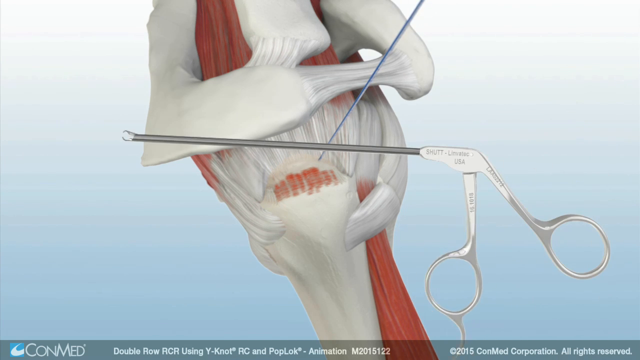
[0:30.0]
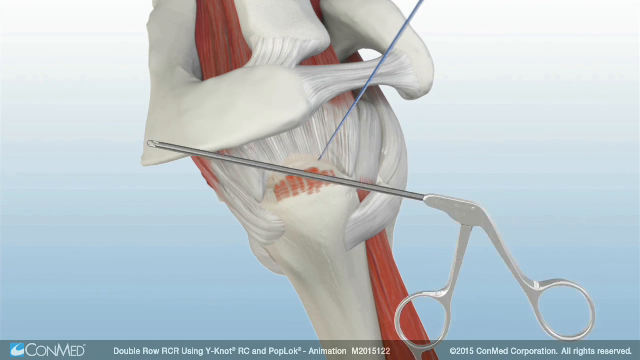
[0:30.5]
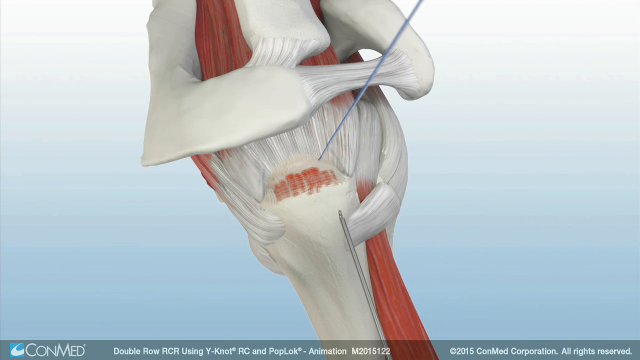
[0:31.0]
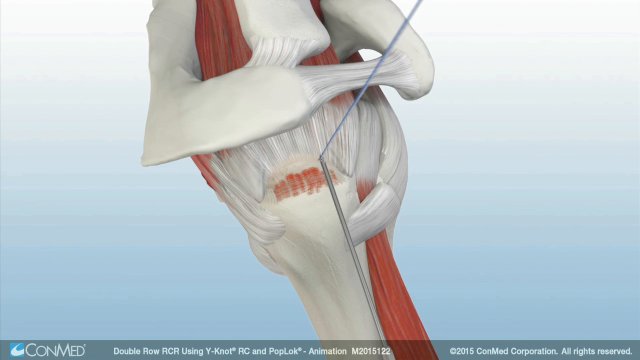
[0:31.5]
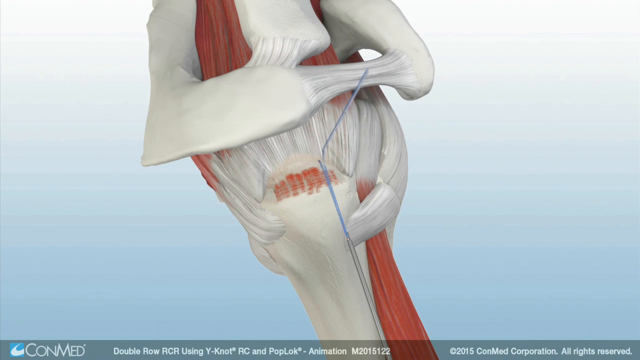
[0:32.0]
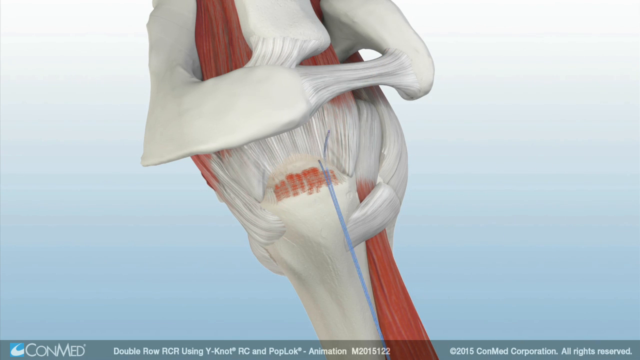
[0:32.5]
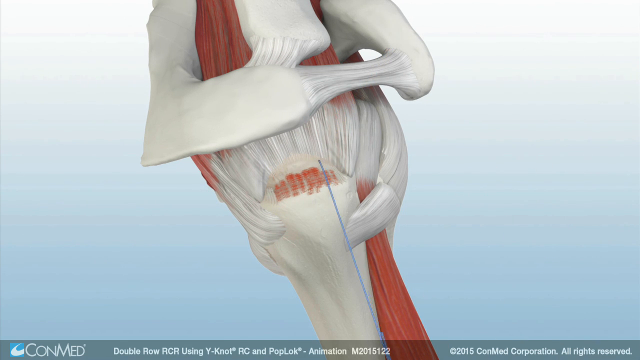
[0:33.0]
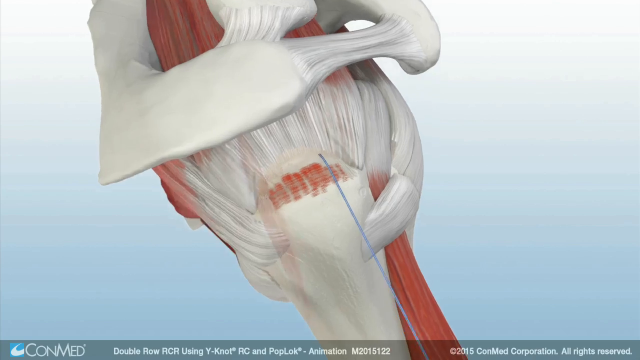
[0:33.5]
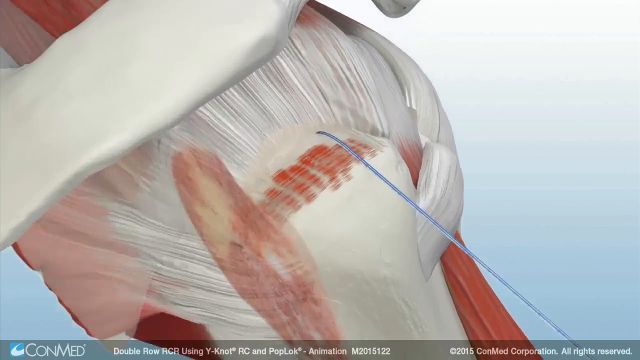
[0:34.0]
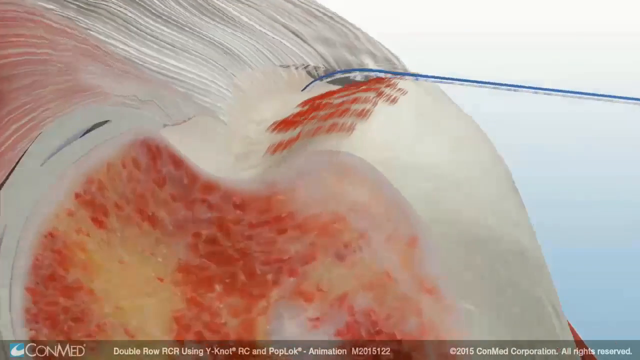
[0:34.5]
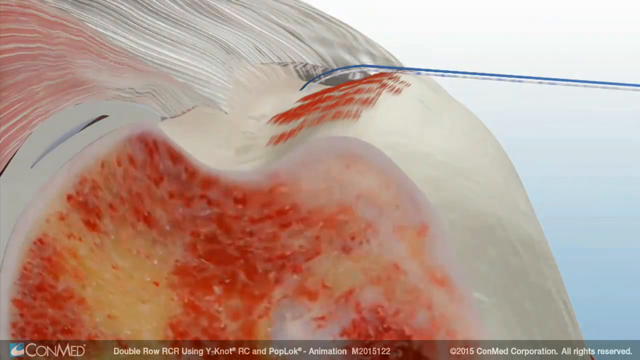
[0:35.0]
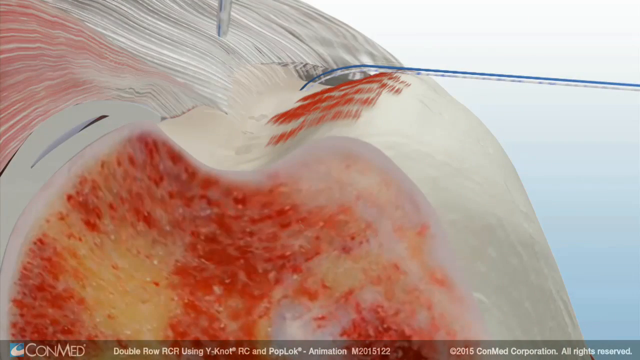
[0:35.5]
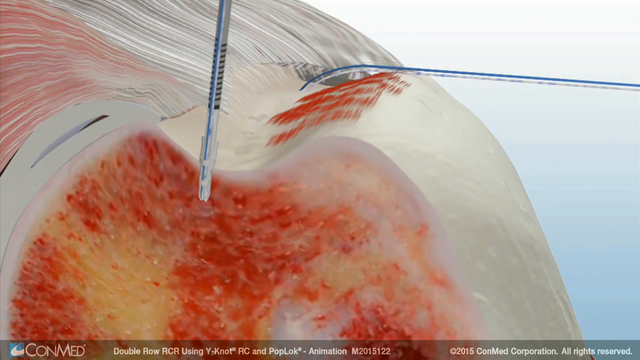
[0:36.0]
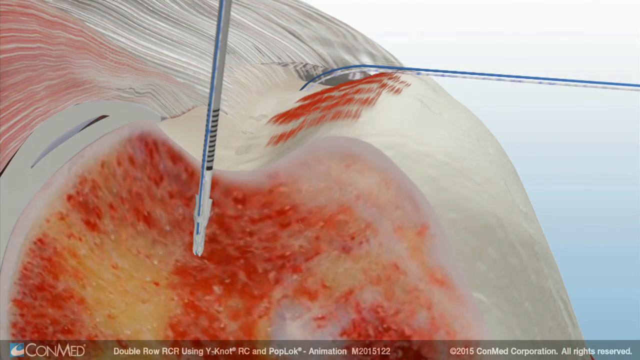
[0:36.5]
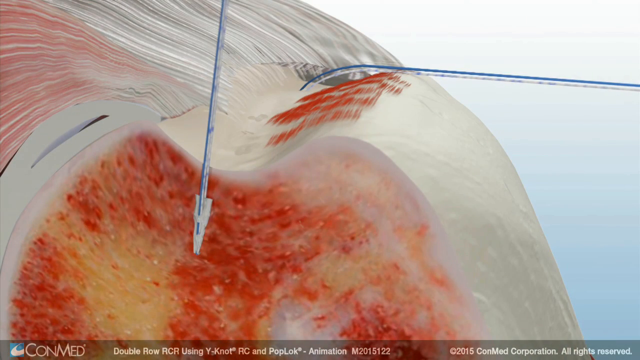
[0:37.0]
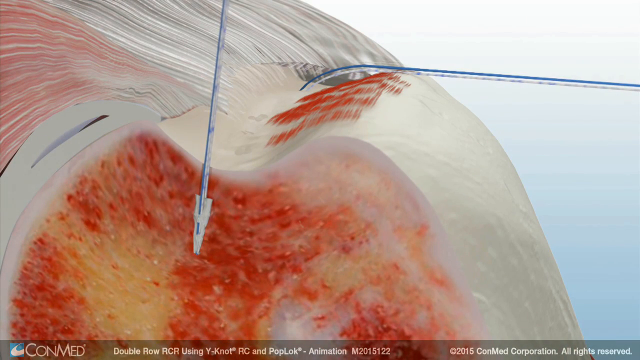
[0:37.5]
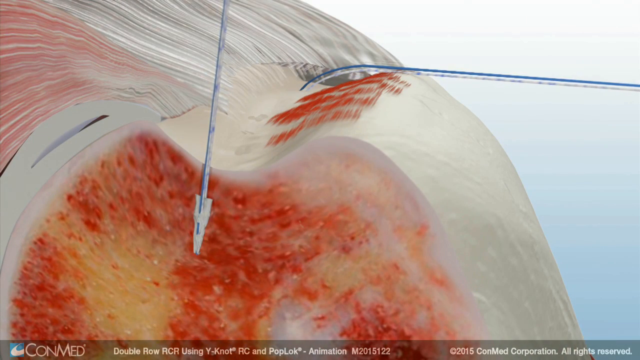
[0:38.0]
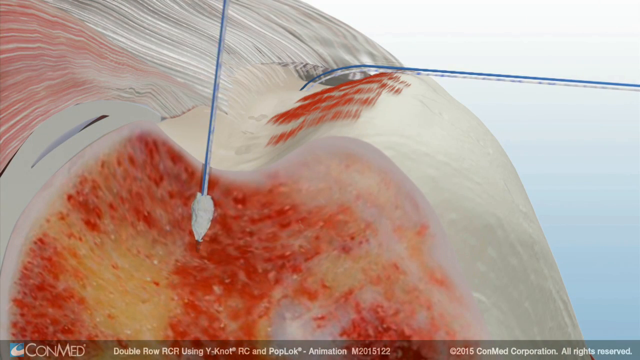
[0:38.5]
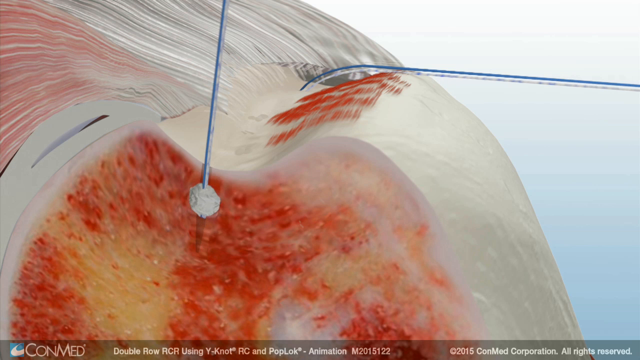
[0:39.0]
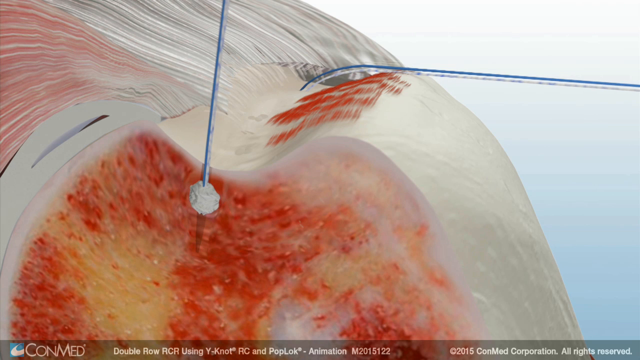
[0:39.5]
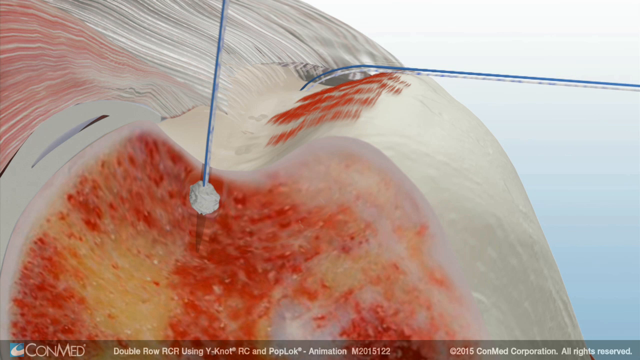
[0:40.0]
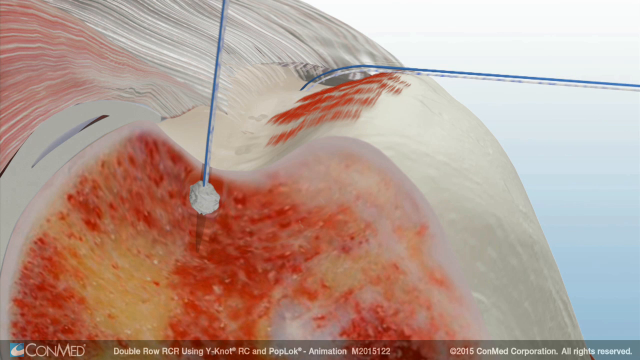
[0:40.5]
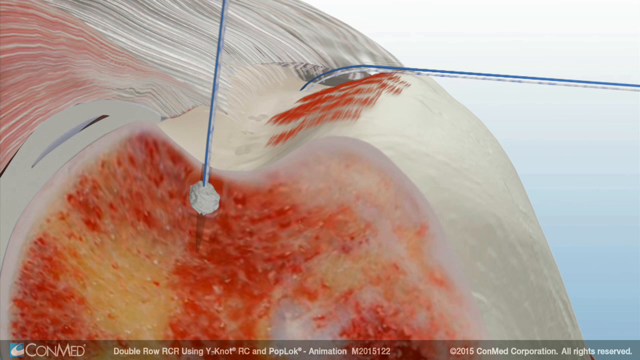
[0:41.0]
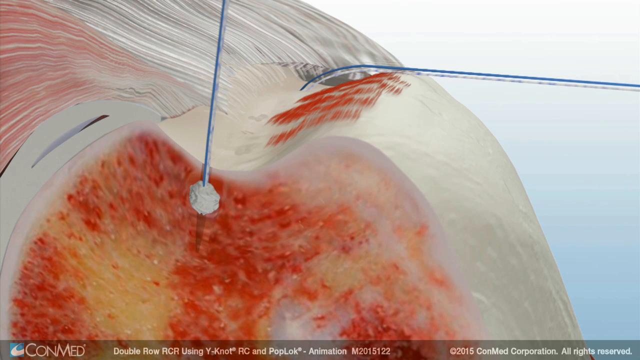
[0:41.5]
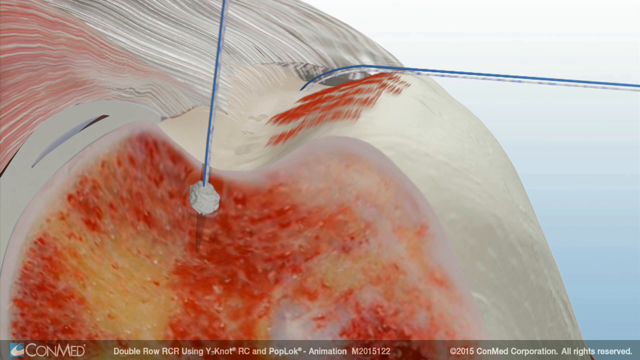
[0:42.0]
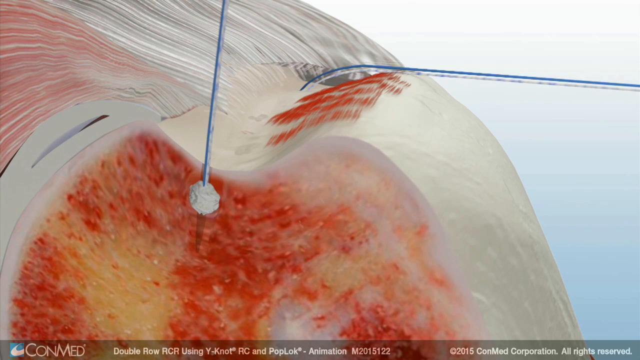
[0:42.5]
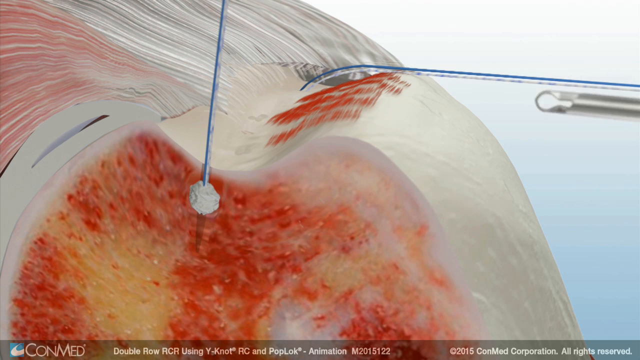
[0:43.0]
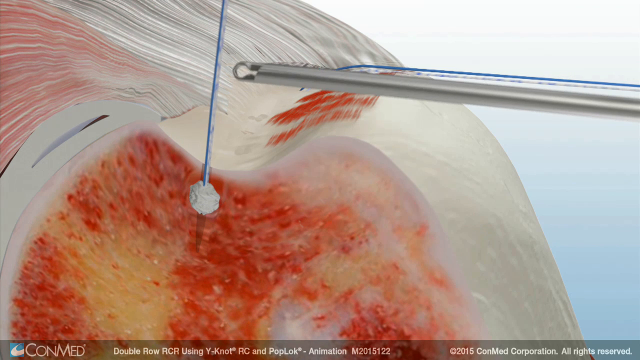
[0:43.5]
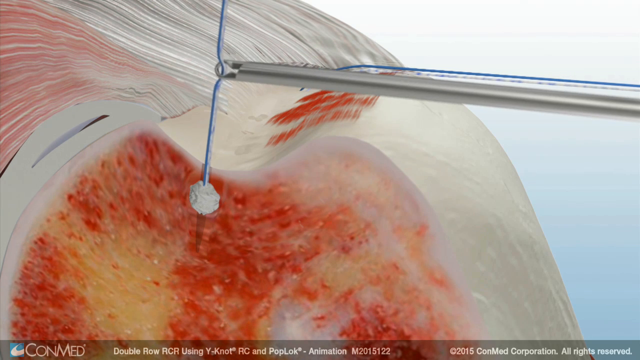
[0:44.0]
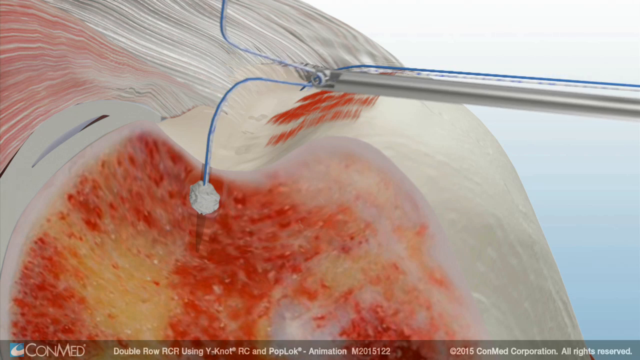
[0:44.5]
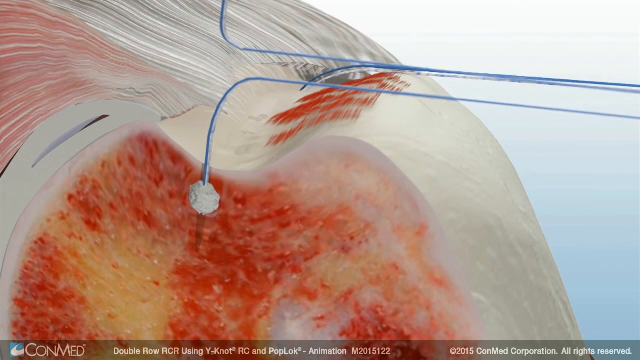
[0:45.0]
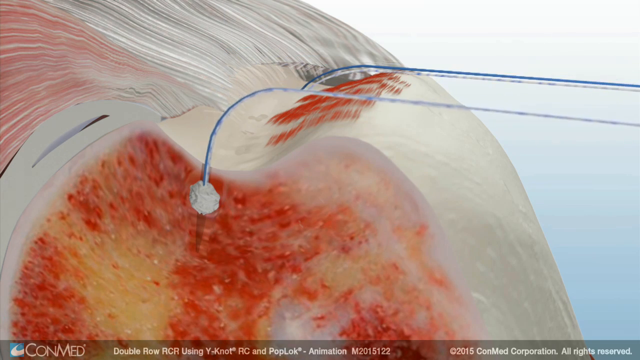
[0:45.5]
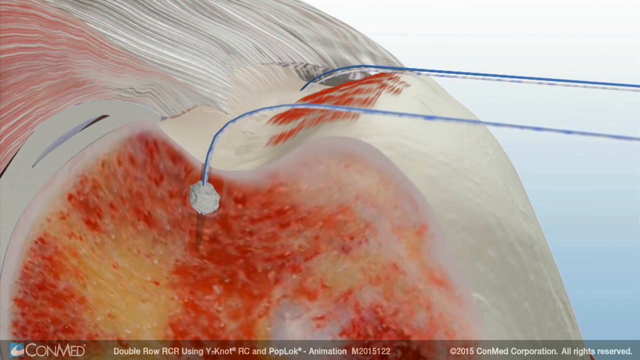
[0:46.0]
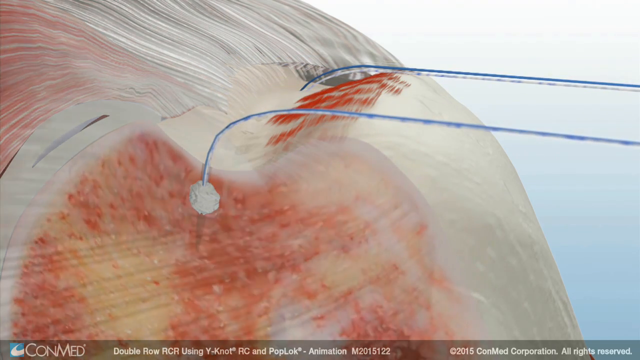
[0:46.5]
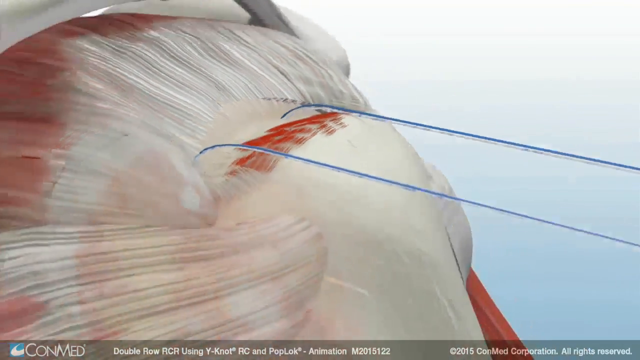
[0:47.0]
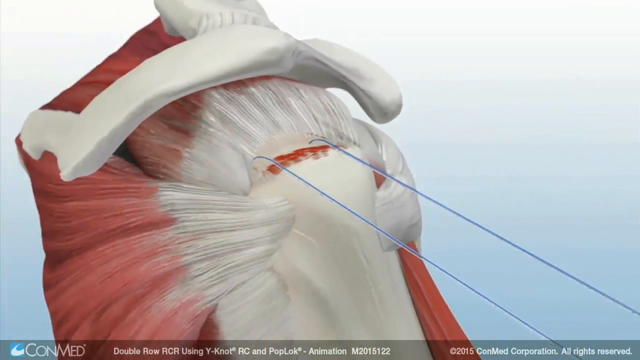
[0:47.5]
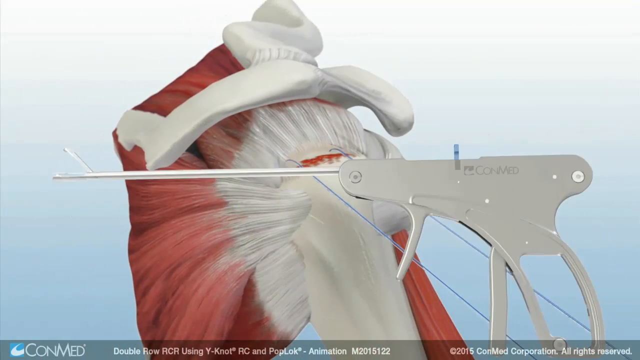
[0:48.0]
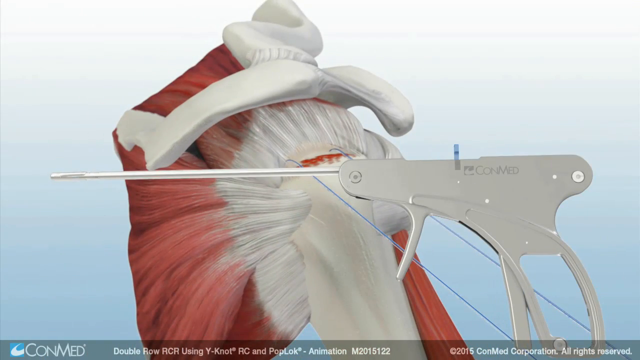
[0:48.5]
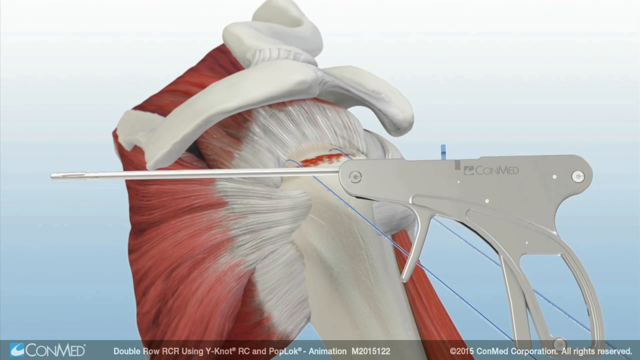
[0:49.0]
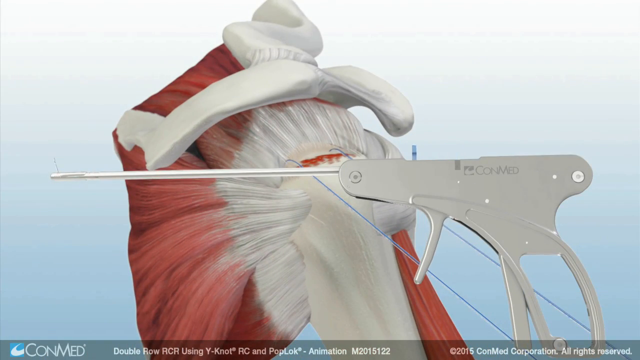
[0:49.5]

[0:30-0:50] An animated illustration shows a surgical procedure being carried out on the tendons and the shoulder bone or shoulder sockets. Two surgical tools appear: one looks like scissors with a long pointed mount, and one looks like surgical thread. The scissors pull out the end of the thread, leaving the thread hanging; the tools appear to be used to suture the tendon back onto the bone. Another tool that looks like a slim metal rod is driven into the bone of the shoulder socket. It is pulled out, leaving what looks like a blue surgical thread emerging from inside the bone of the shoulder socket. Another surgical tool pulls the thread toward the right side of the frame. Two blue surgical threads, or sutures, are then pulled through and from the upper arm bone that attaches to the shoulder socket.